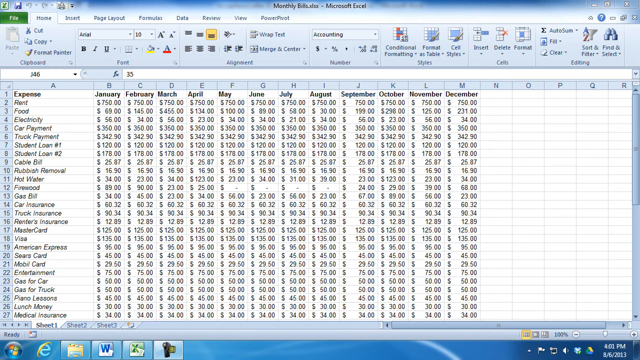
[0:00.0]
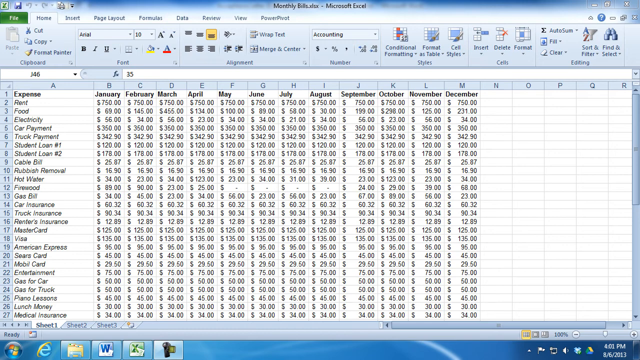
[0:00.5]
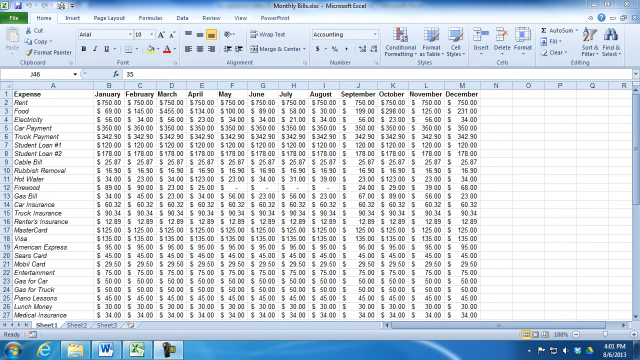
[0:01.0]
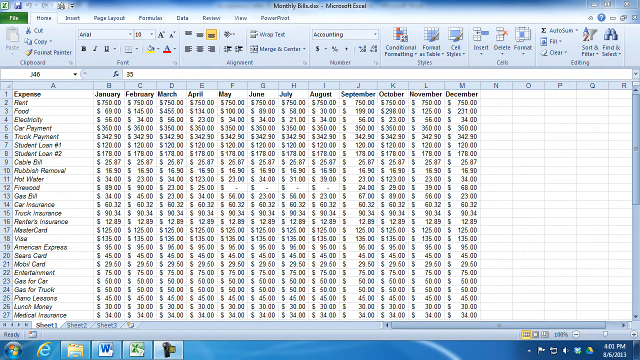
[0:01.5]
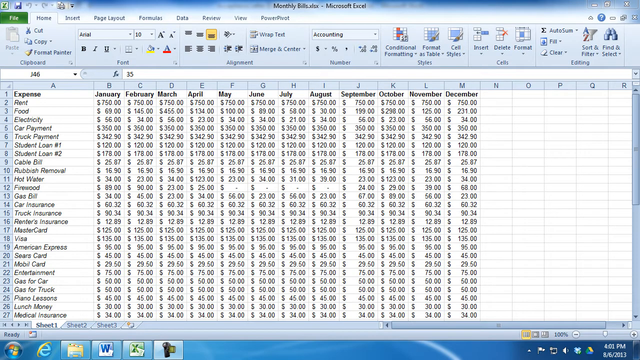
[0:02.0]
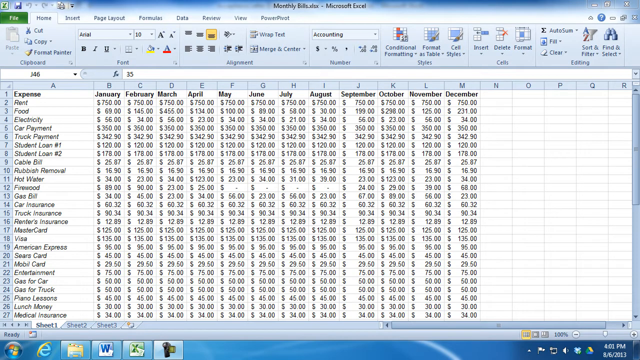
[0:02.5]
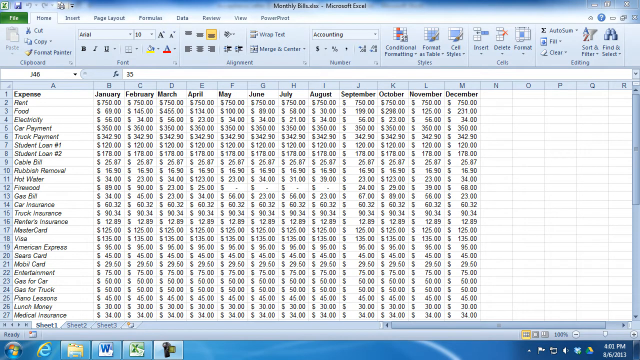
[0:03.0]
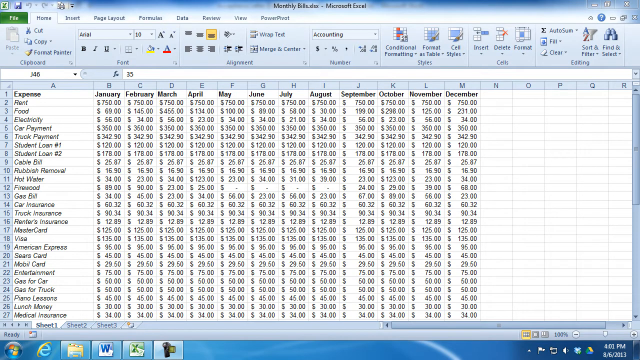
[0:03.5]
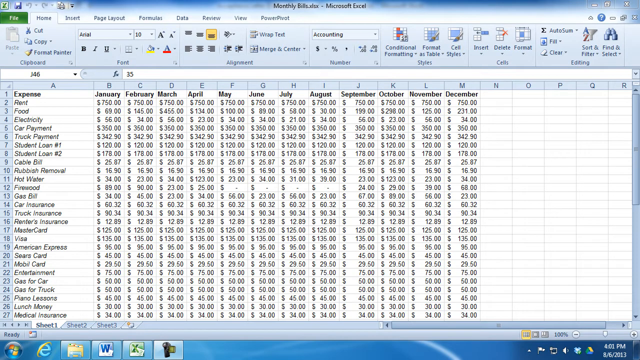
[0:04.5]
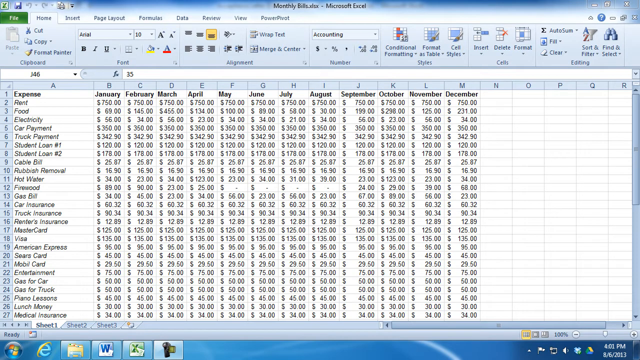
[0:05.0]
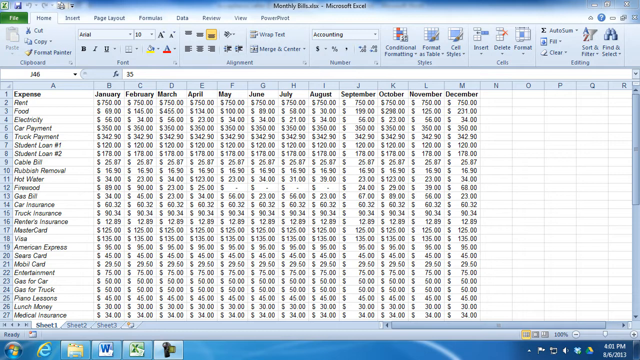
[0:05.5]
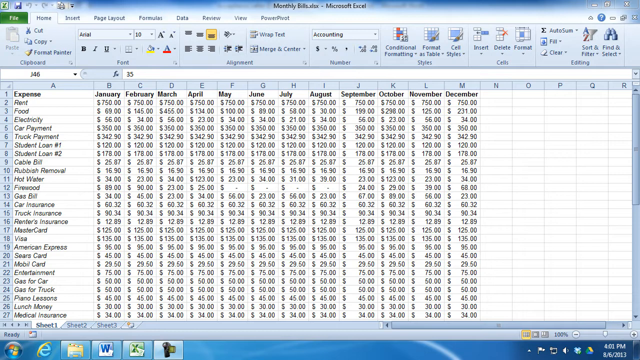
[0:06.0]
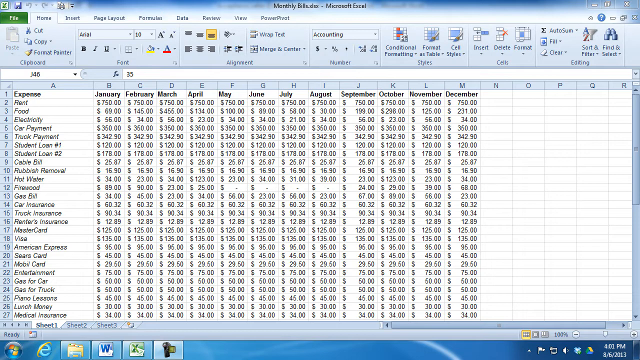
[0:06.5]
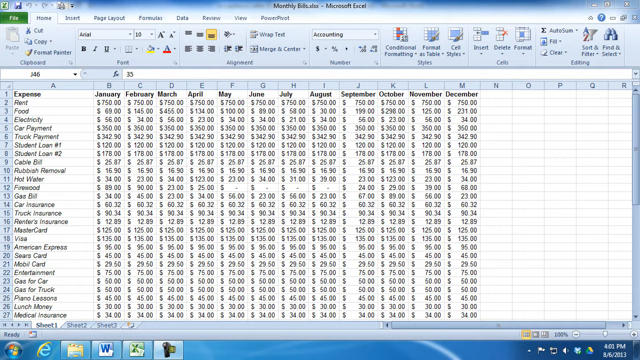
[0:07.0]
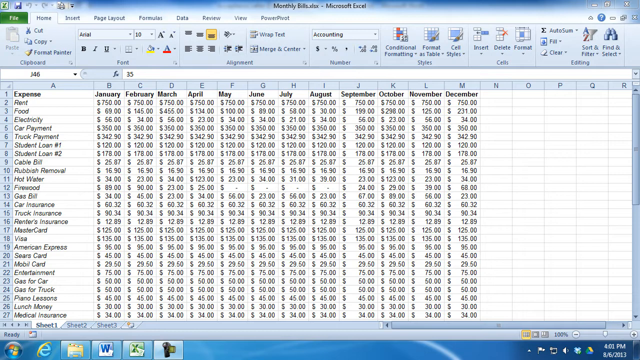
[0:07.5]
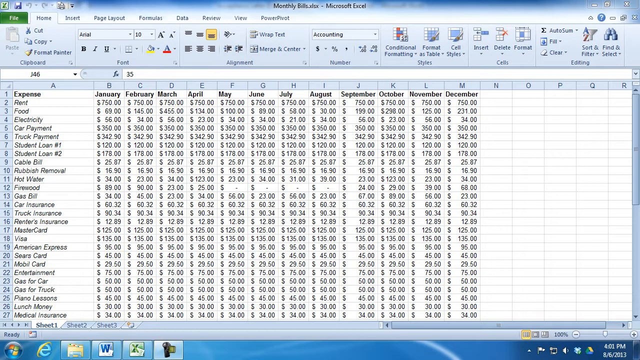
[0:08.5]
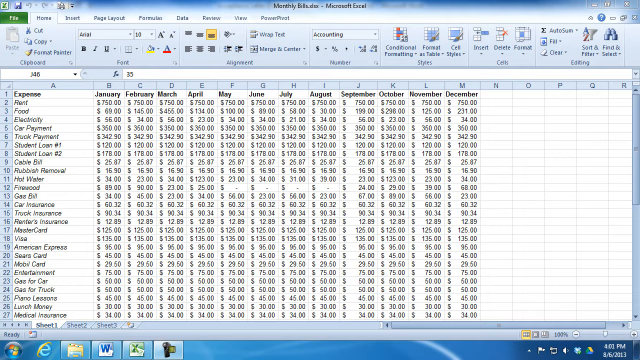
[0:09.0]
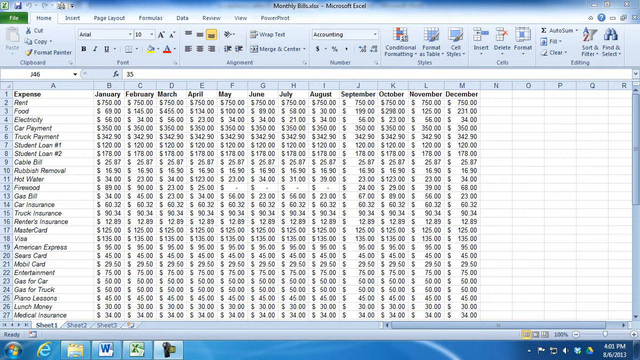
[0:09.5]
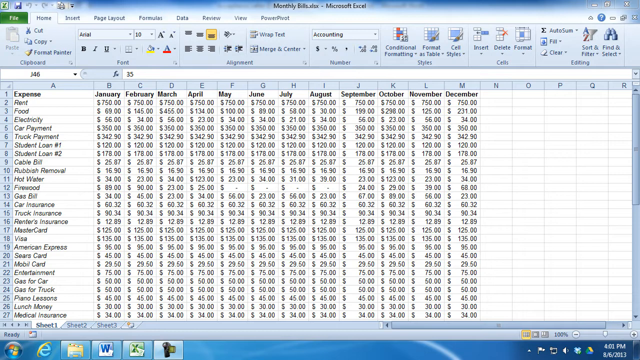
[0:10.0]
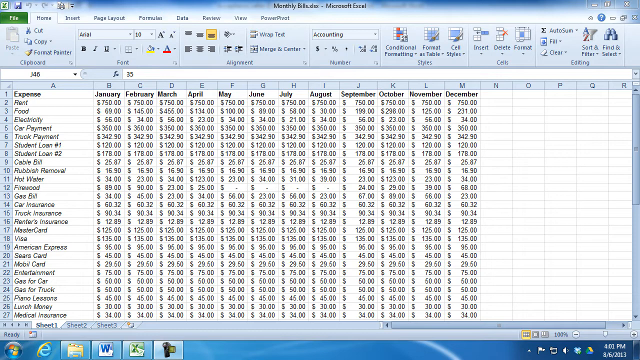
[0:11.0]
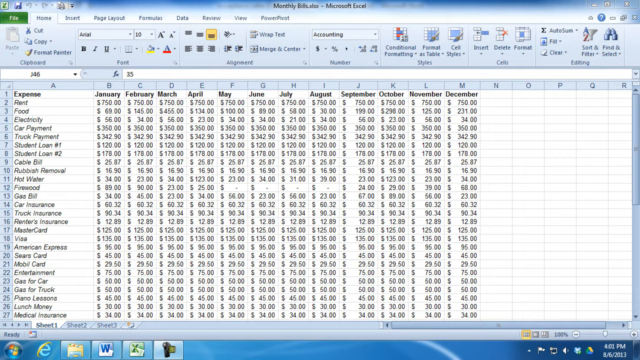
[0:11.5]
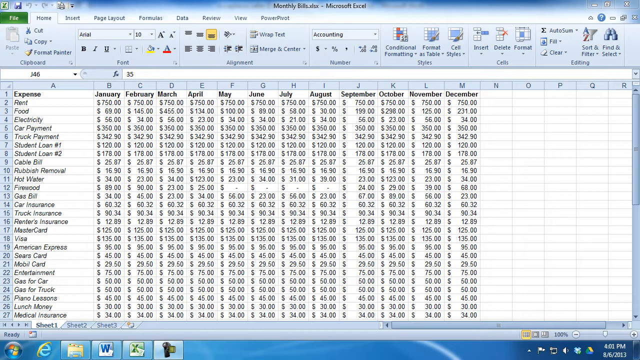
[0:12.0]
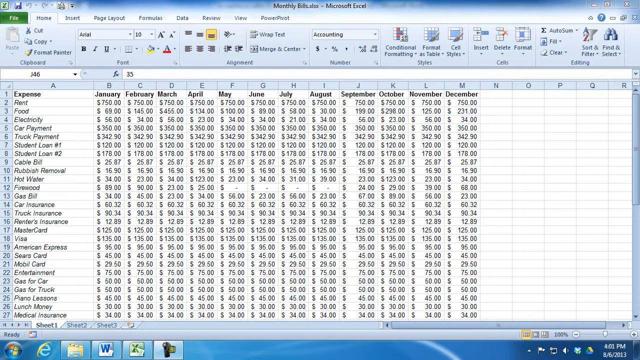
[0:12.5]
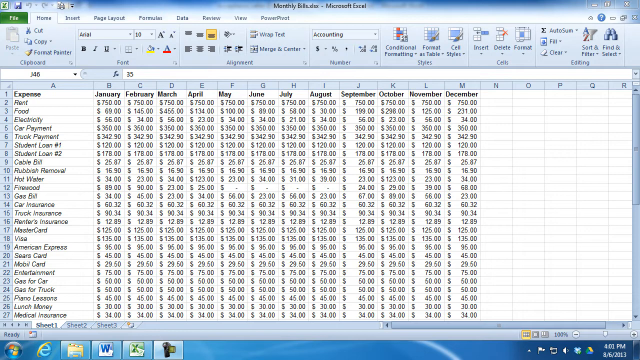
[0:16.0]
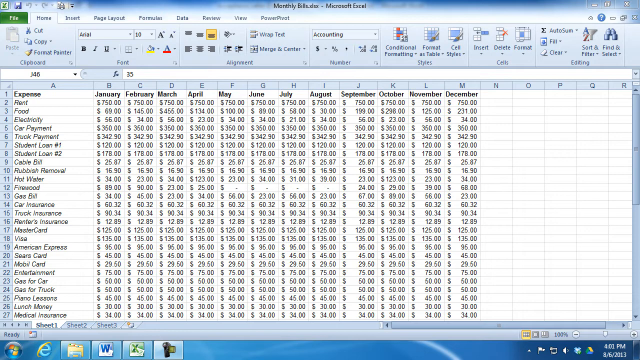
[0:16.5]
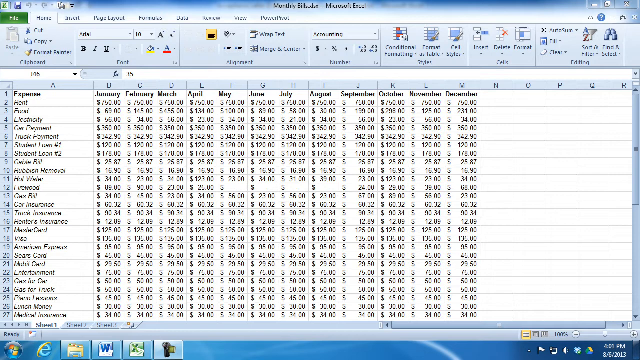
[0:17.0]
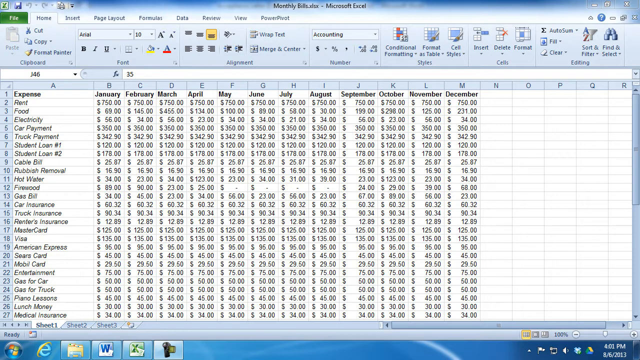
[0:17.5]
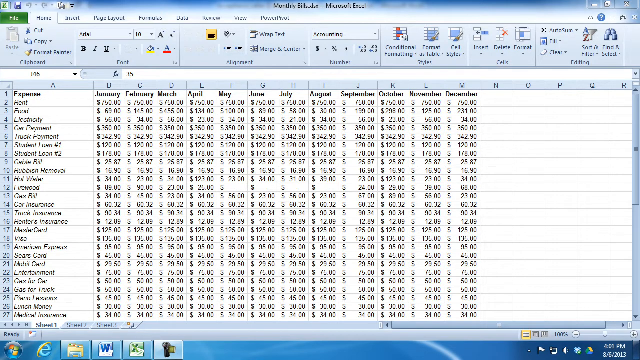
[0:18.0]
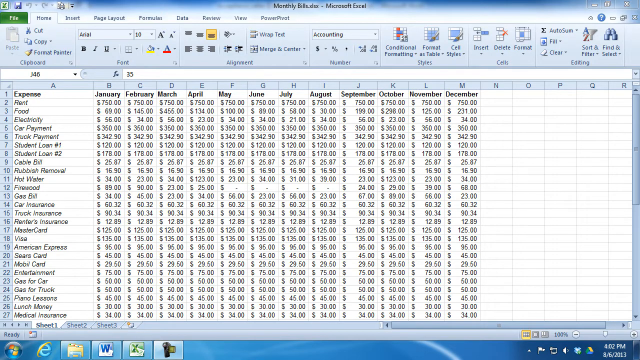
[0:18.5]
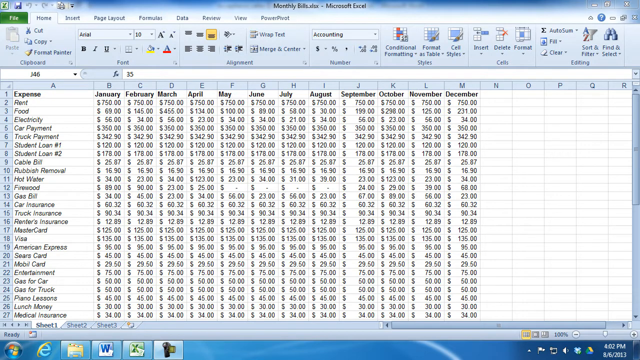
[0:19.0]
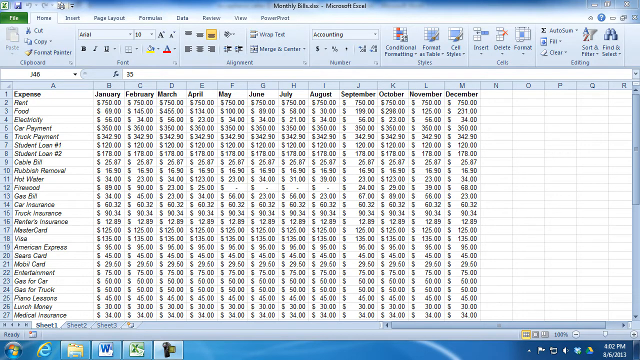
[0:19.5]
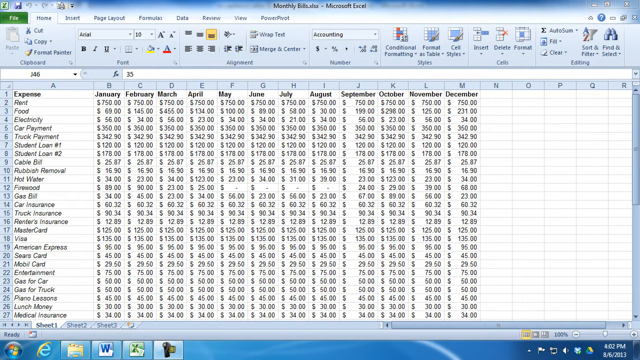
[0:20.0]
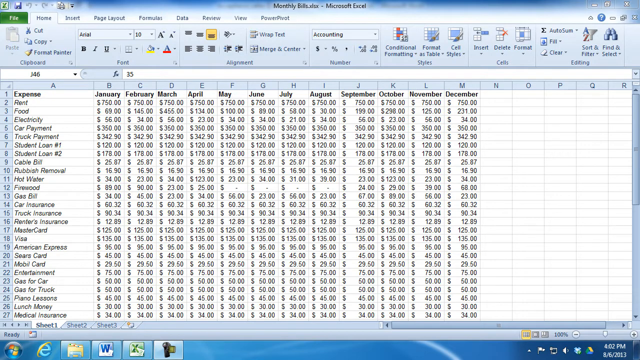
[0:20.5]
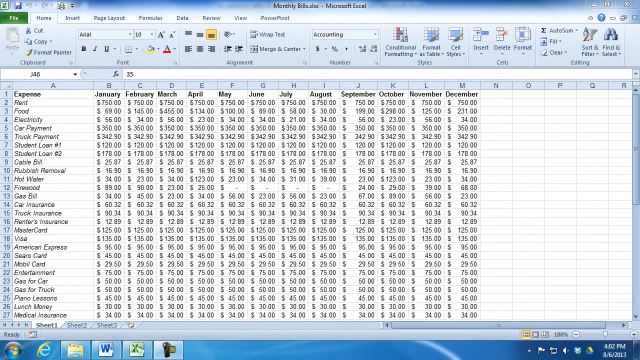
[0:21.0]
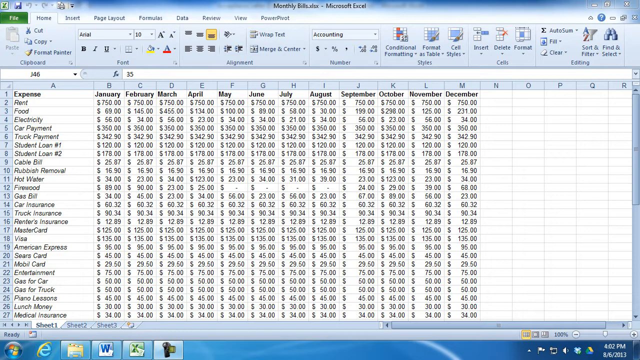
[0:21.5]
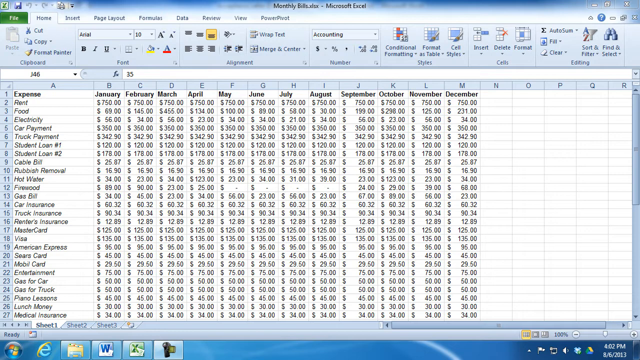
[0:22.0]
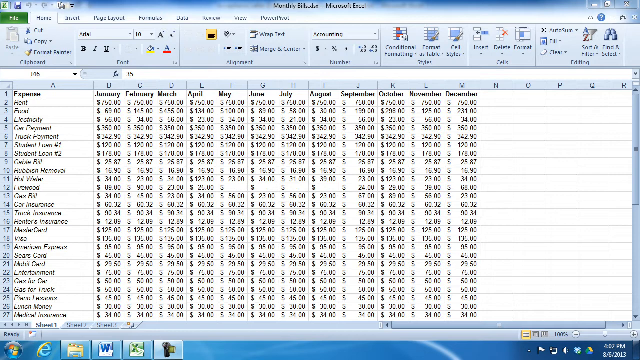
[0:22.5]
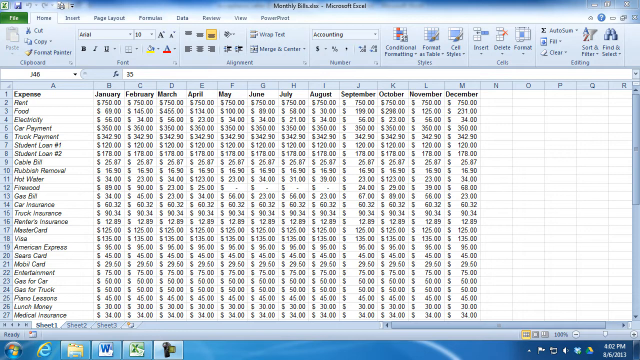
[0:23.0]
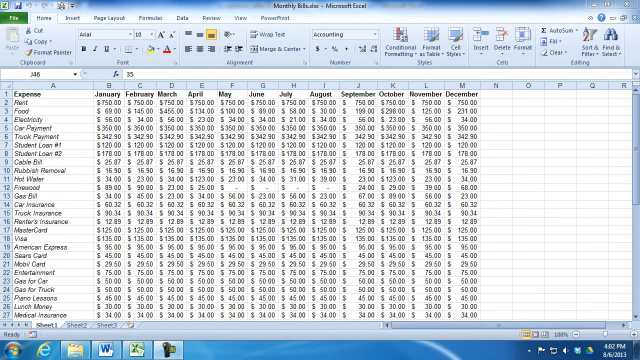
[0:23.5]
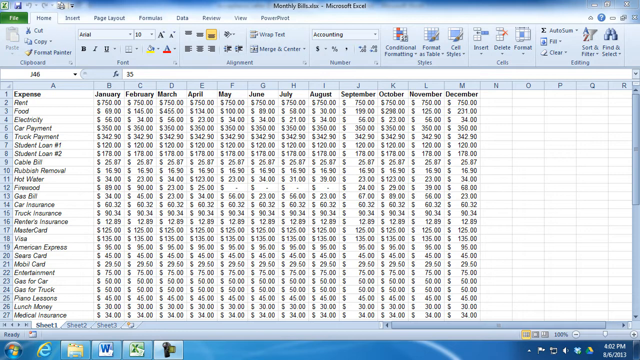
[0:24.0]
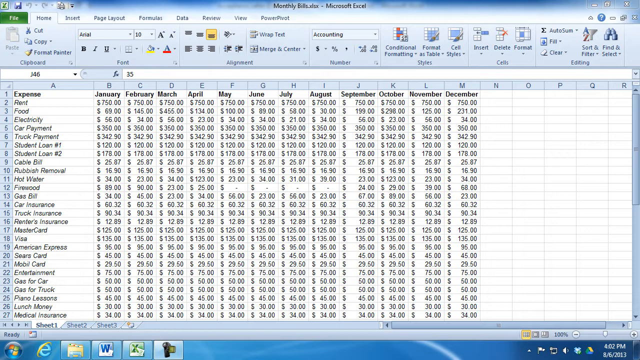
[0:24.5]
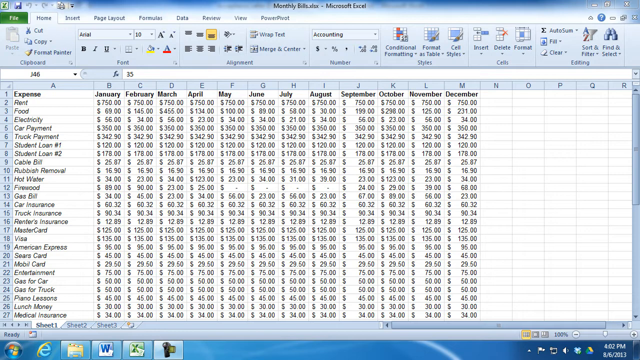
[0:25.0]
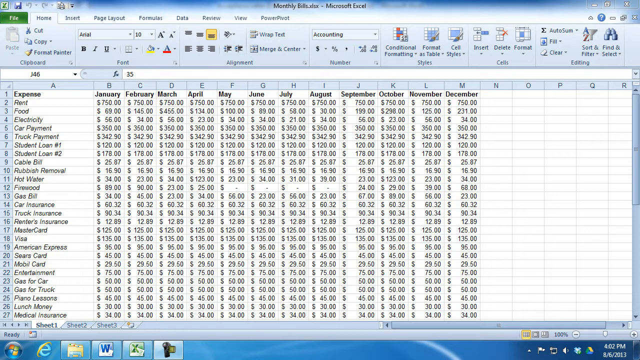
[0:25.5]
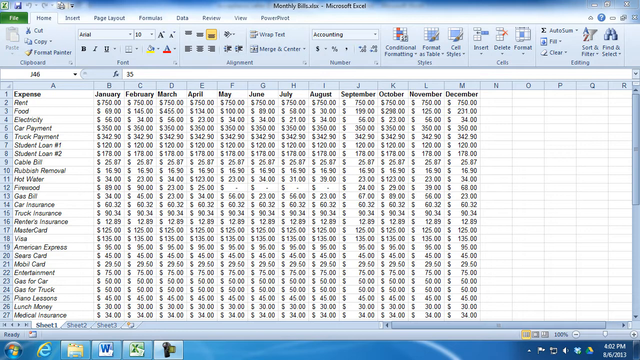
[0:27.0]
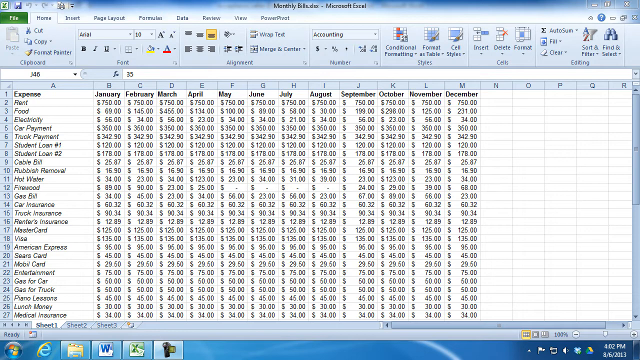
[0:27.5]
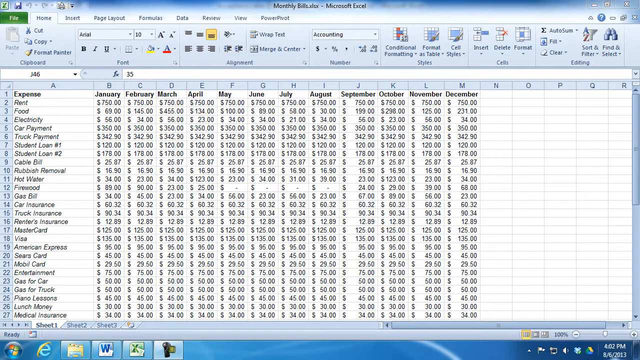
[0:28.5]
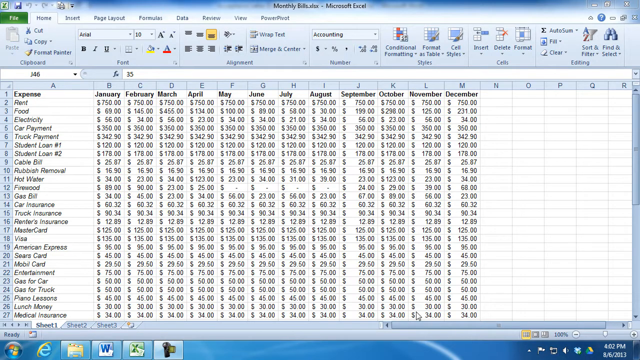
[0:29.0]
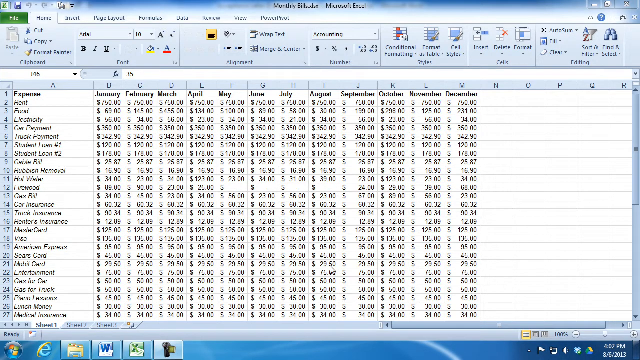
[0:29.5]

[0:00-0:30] A spreadsheet titled "monthly bills" is open in Microsoft Excel. Across the top are the usual tabs, with Home currently selected. To the left of Home is a small green tab that says "file", and to the right of Home are insert, page layout, data, review, view and PowerPoint. The spreadsheet is a budget: under cell A, row 1 reads "expense", and the headings then run from January all the way through December. Listed under expense are items such as food, rent, electricity, hot water, firewood and gas bill. Sheet one is open, and at the bottom there are tabs for sheets one, two and three. The expense heading and the months are bolded, while the items under expense are italicized, with slanted text. The amounts show dollar signs, with hundreds, tens, a decimal and two places for cents. The toolbar has drop-downs for the text font and size, along with options for centering text, indenting, bold and italics, and the number formatting is currently set to accounting.